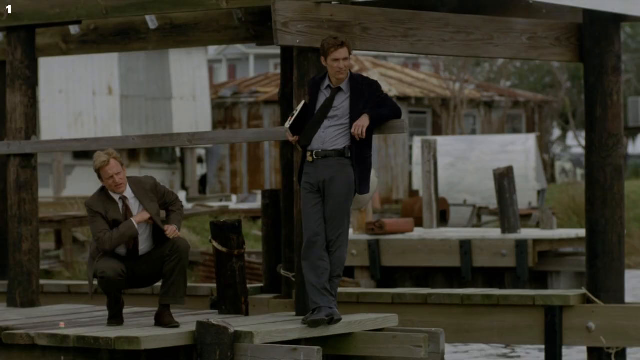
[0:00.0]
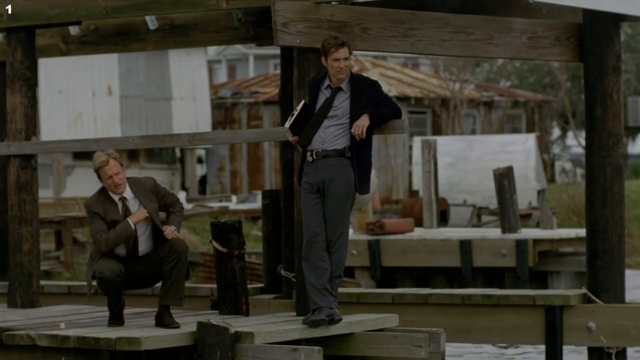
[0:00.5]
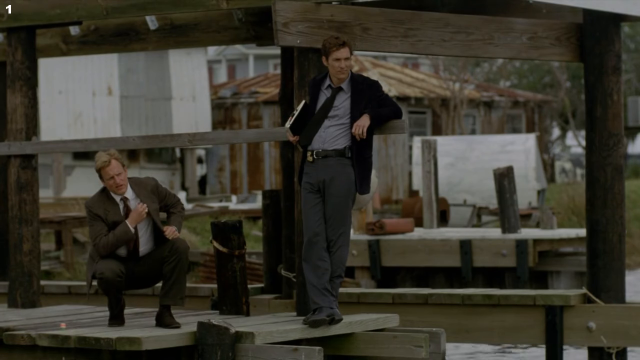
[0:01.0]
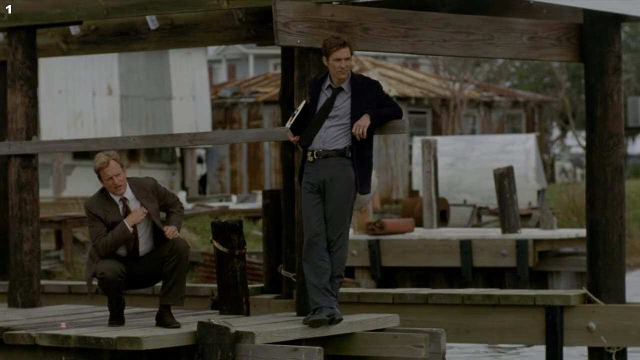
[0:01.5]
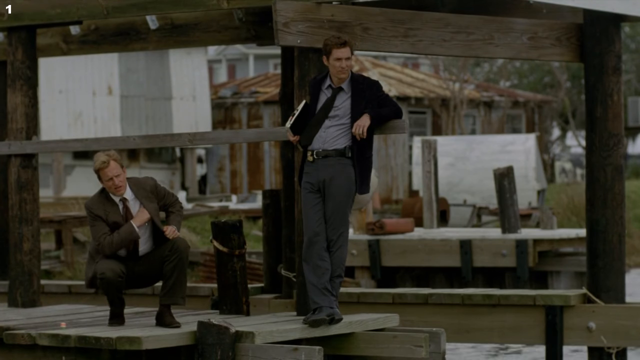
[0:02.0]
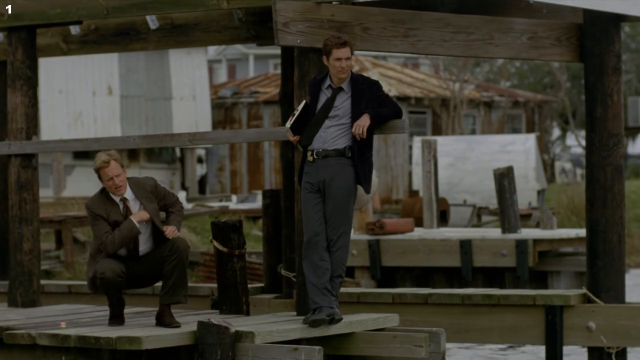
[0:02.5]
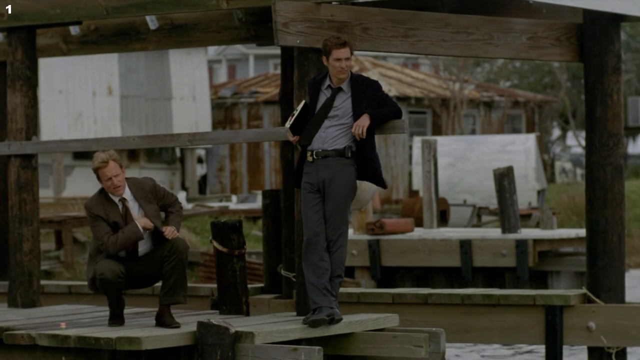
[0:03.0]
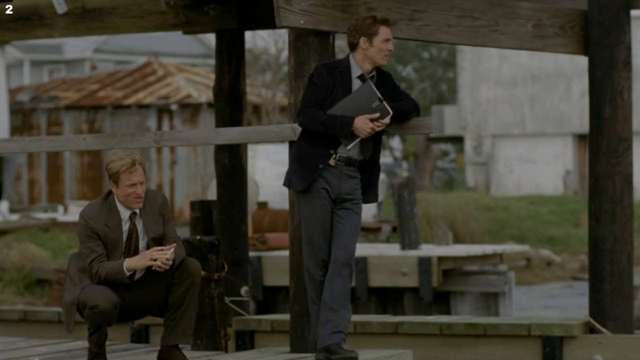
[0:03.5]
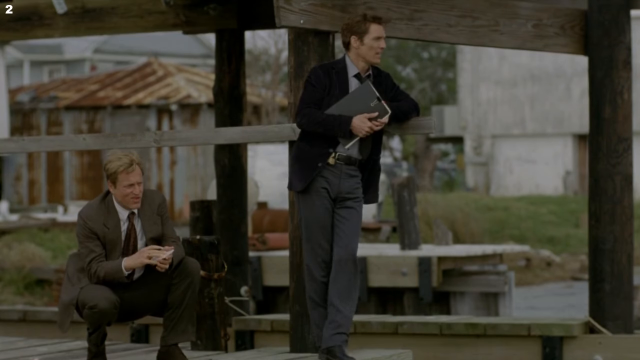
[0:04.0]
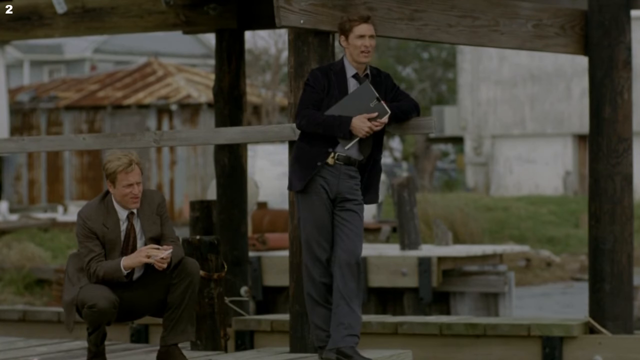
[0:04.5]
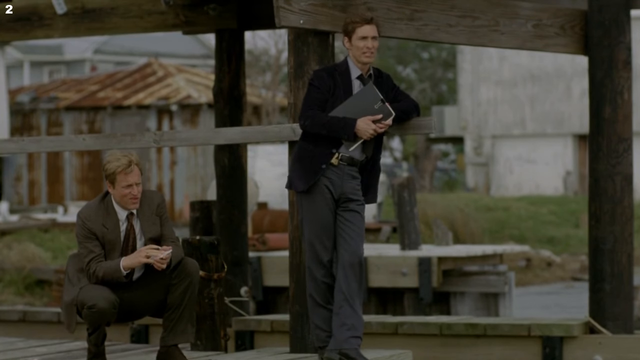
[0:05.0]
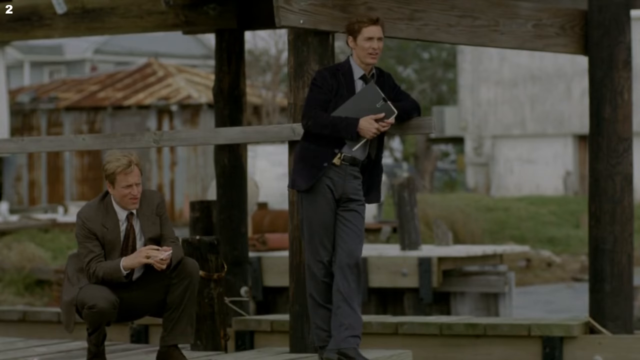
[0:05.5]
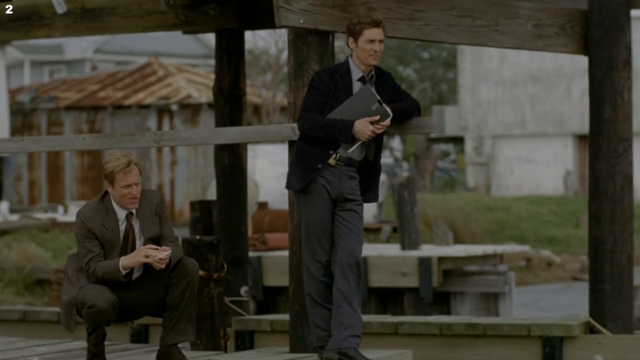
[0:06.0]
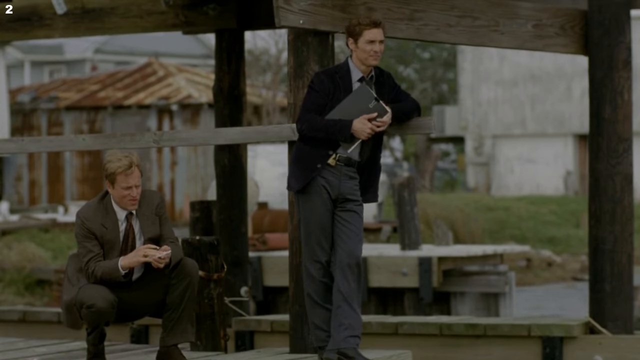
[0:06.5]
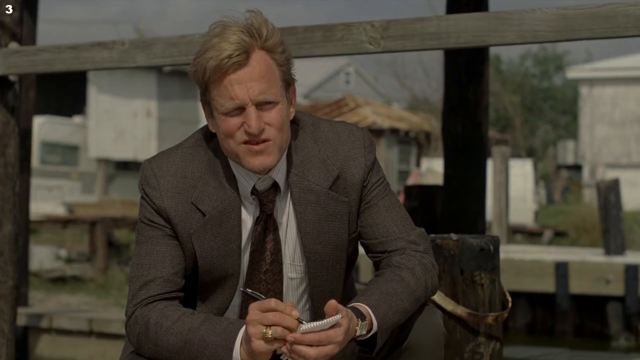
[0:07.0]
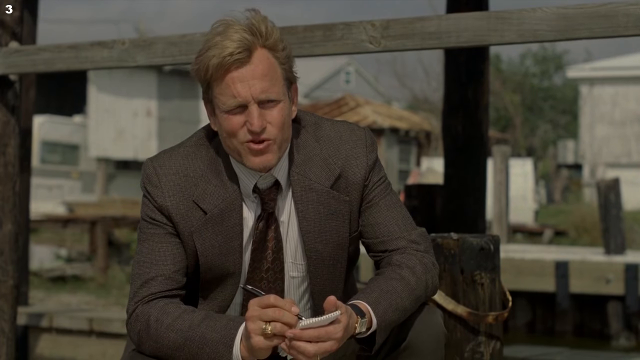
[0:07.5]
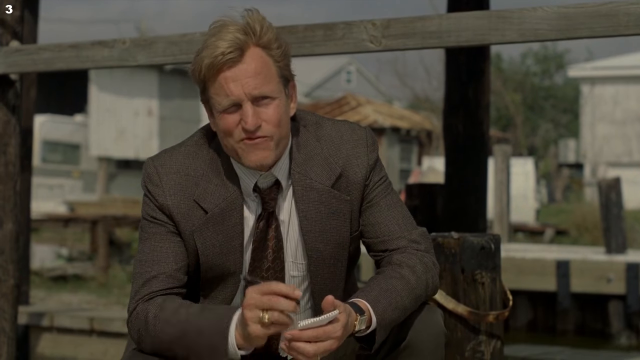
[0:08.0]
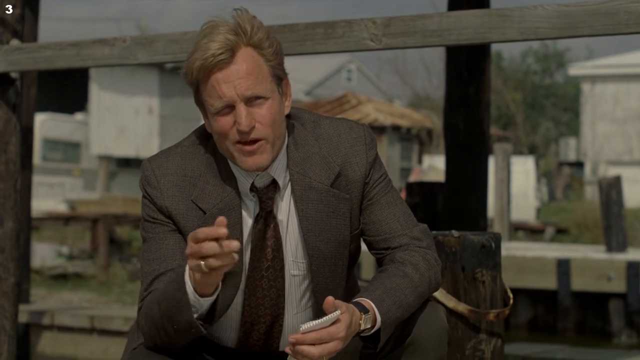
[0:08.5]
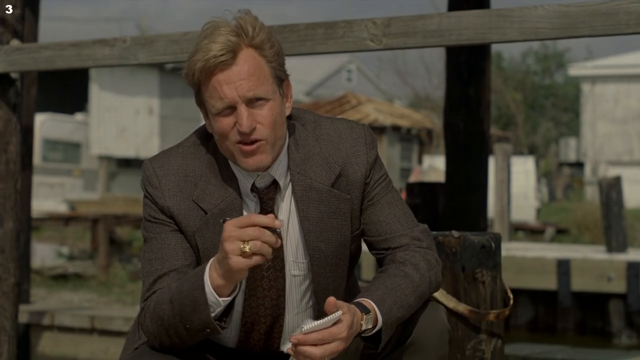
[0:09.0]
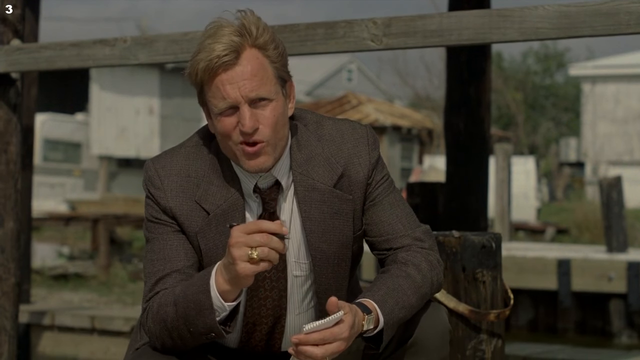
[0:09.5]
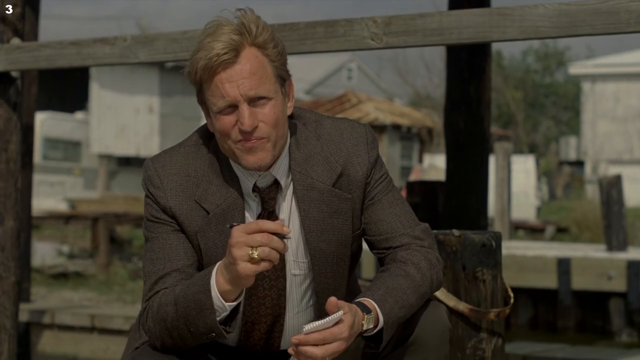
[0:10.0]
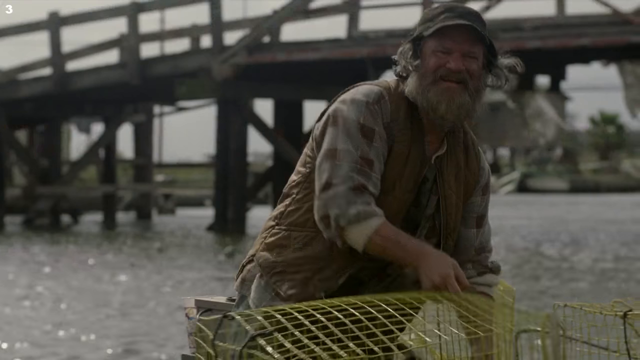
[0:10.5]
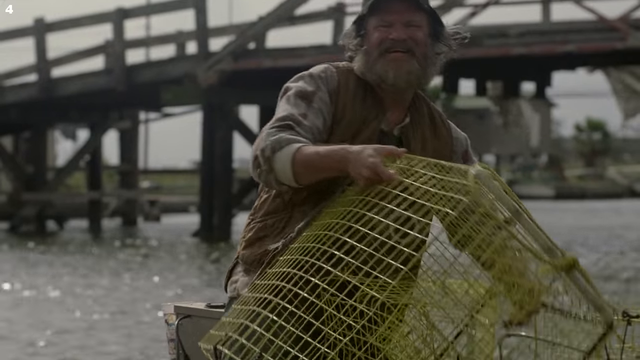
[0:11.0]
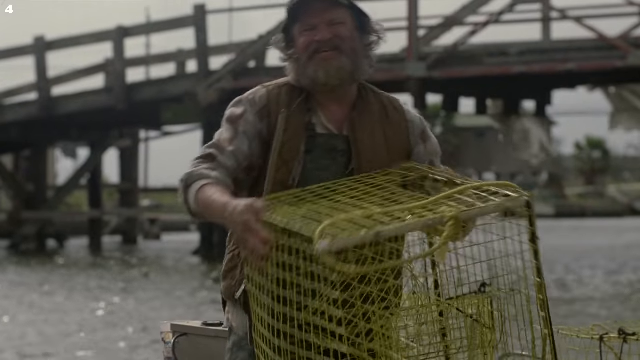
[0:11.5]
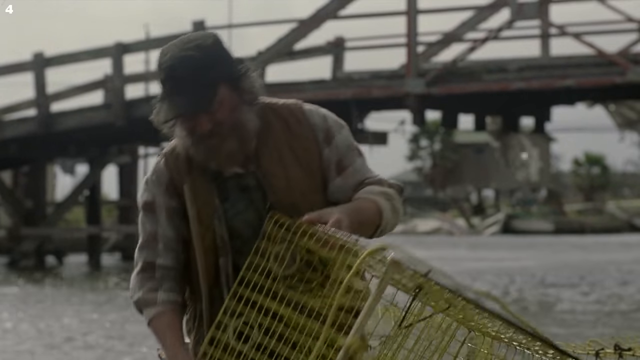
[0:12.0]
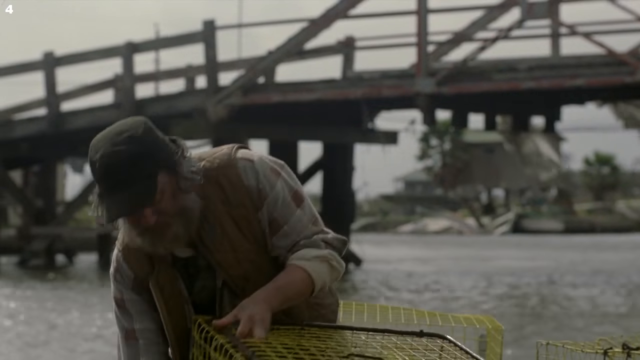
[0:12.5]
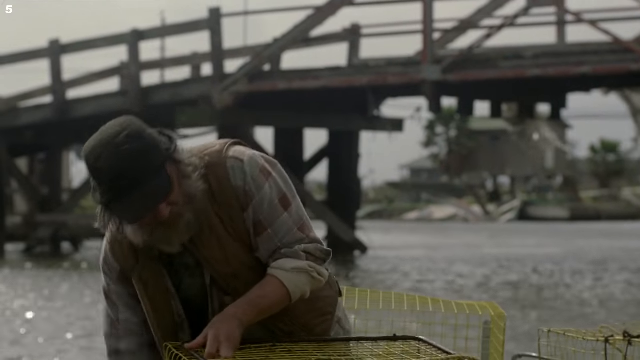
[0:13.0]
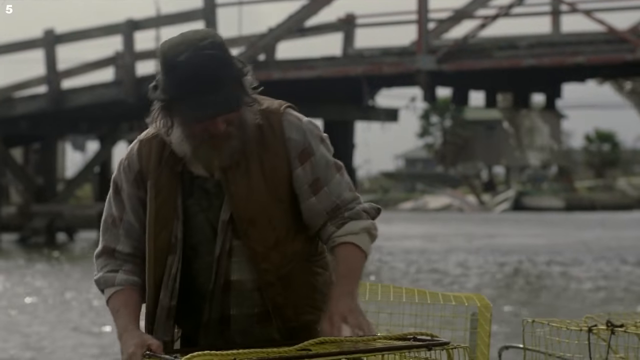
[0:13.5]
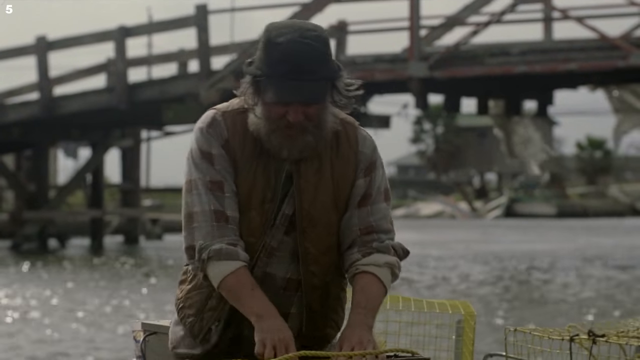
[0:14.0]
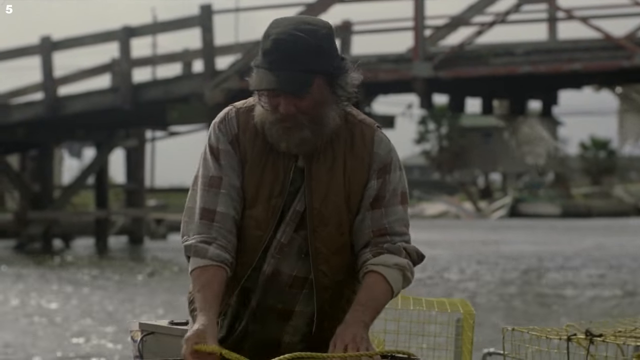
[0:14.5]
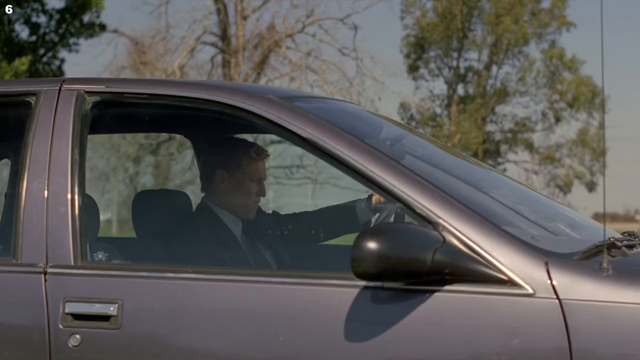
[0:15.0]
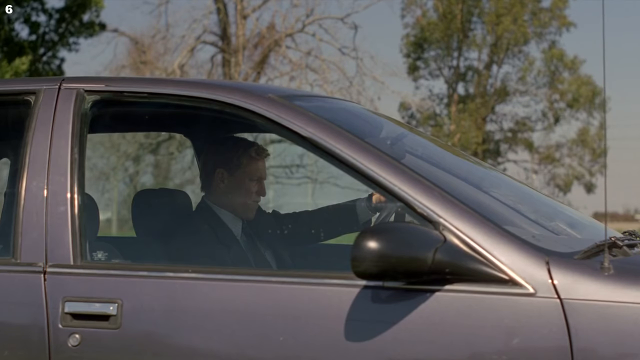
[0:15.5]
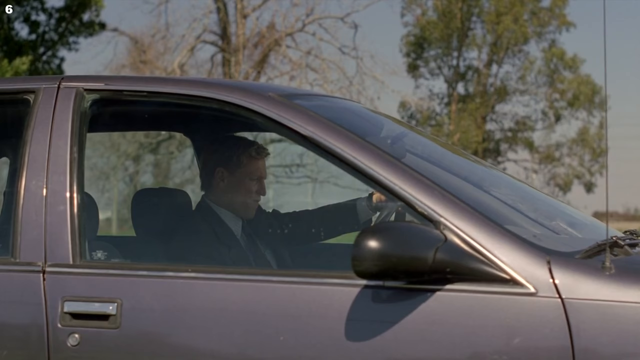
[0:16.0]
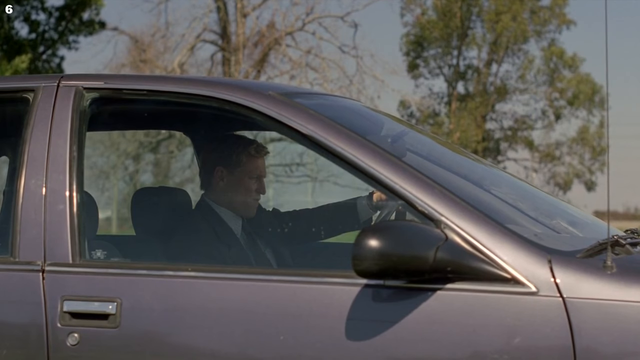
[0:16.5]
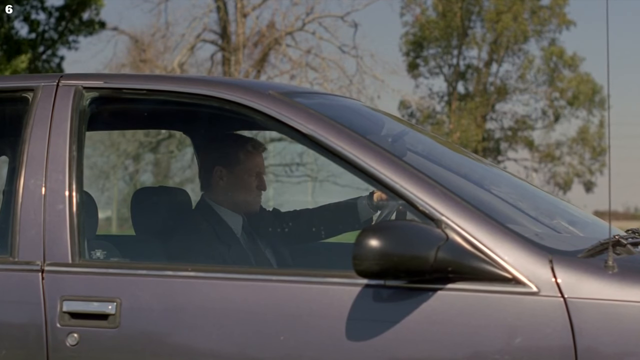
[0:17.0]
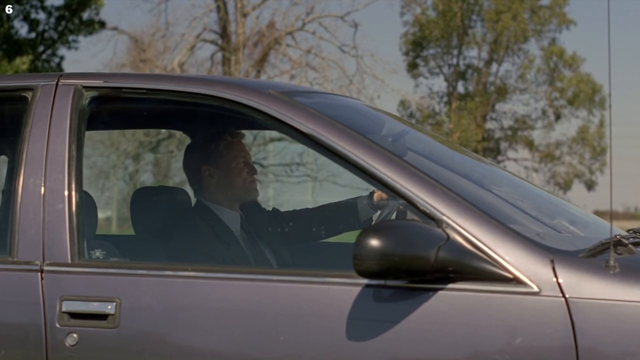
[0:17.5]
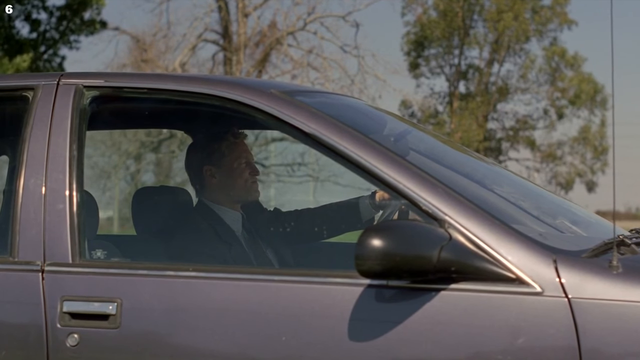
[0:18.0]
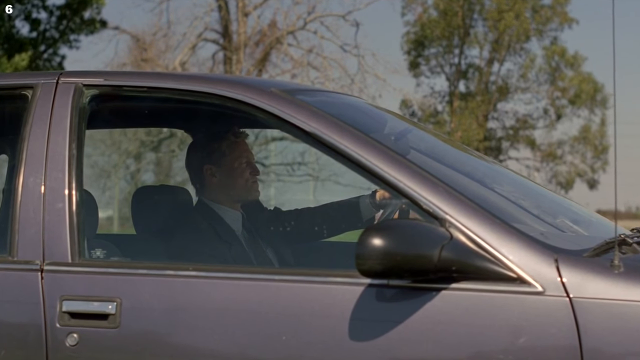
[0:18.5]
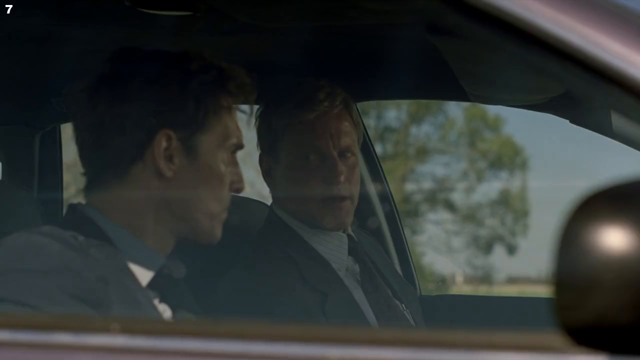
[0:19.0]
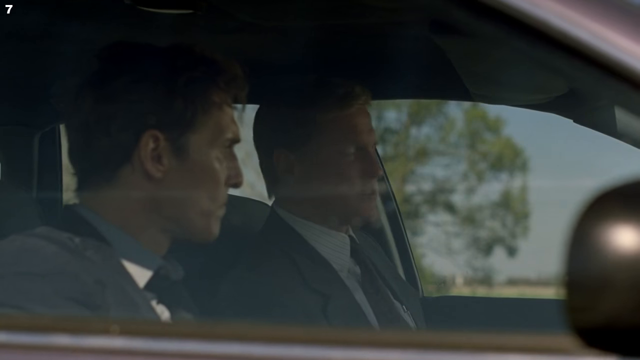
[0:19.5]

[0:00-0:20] A man waits while another man hands him something, and he seems to be having a conversation with an older man who is in the sea with something like a net. Two men stand outside the sea on top of some planks, something like a bridge. One has dark brown hair and wears gray pants; the other is crouched down but not on his knees and takes a small notebook out of his pocket. They look at something while talking. The older man in the sea is maybe fishing. Then the two men are in a car, having a conversation.